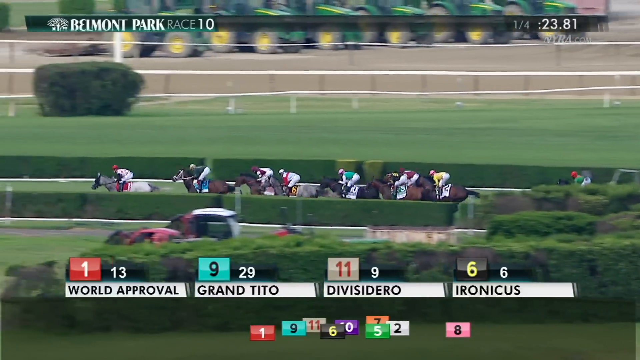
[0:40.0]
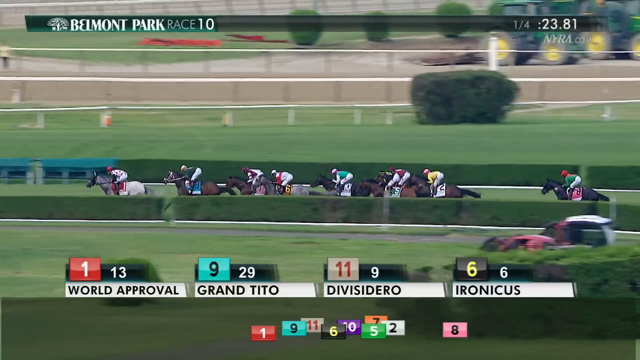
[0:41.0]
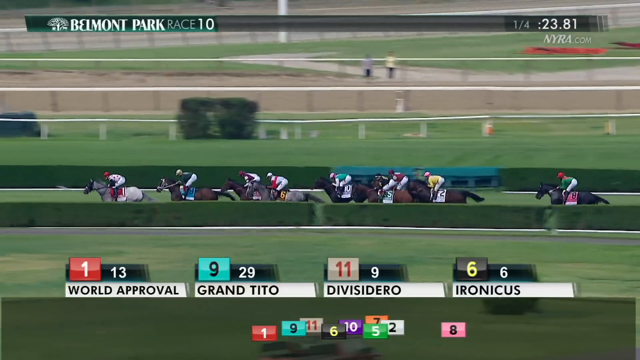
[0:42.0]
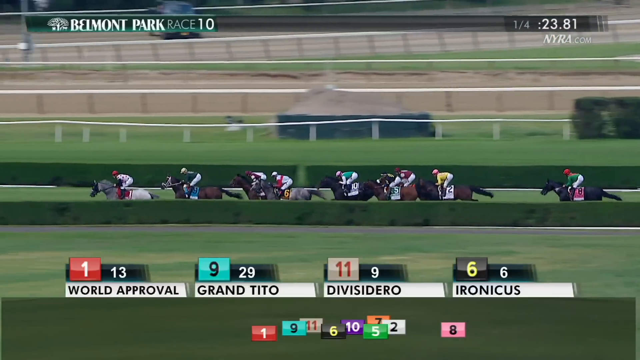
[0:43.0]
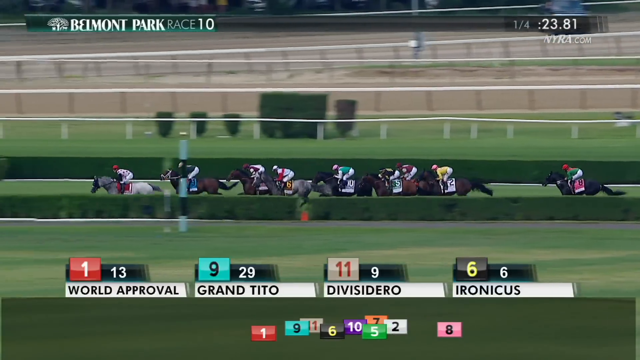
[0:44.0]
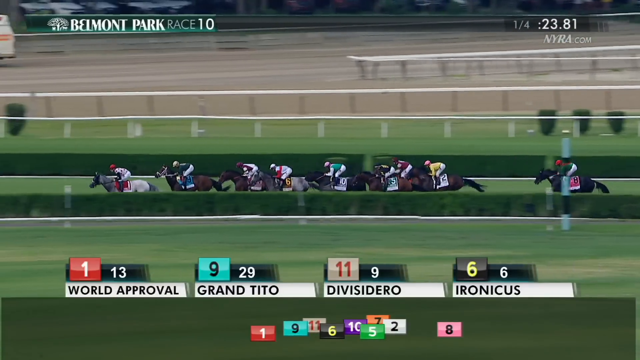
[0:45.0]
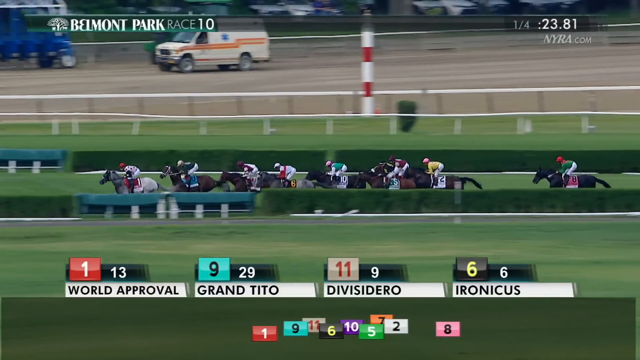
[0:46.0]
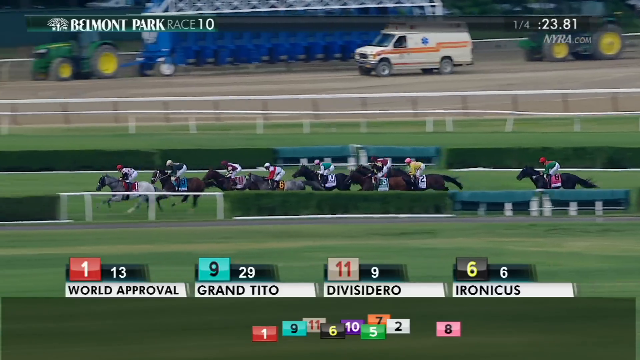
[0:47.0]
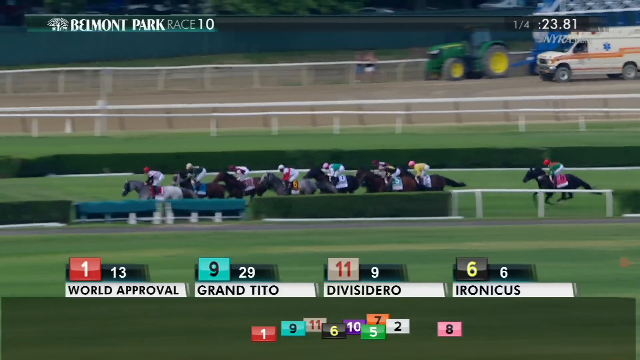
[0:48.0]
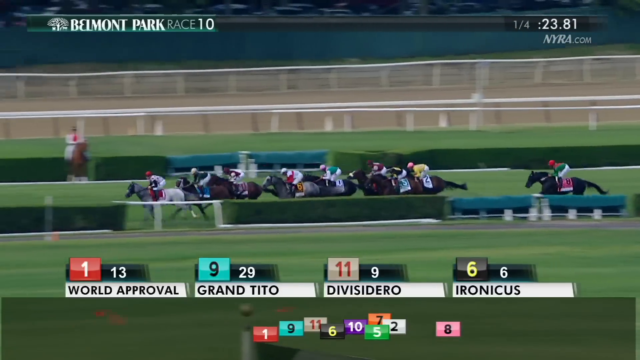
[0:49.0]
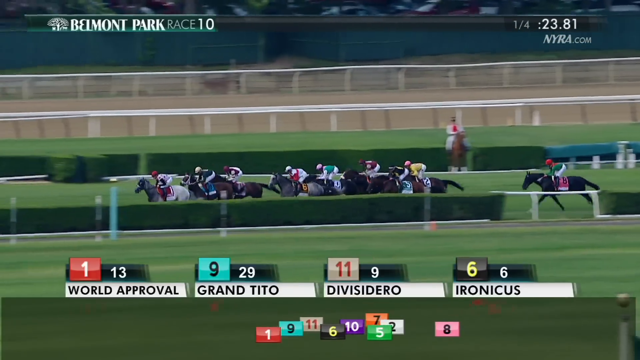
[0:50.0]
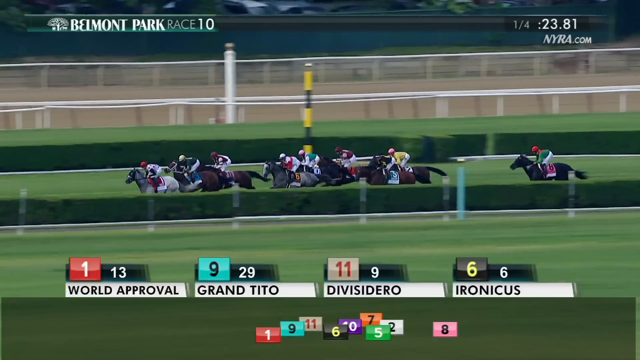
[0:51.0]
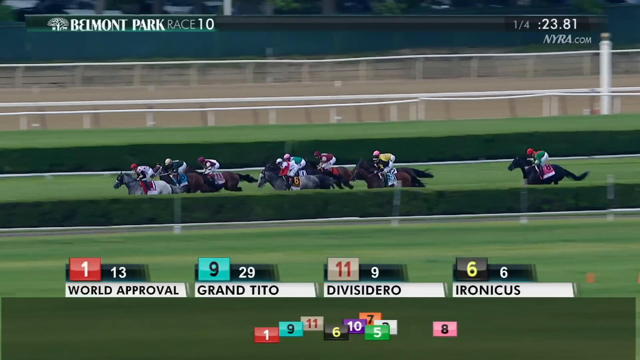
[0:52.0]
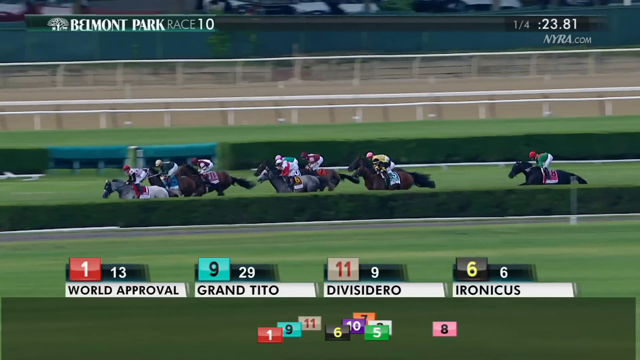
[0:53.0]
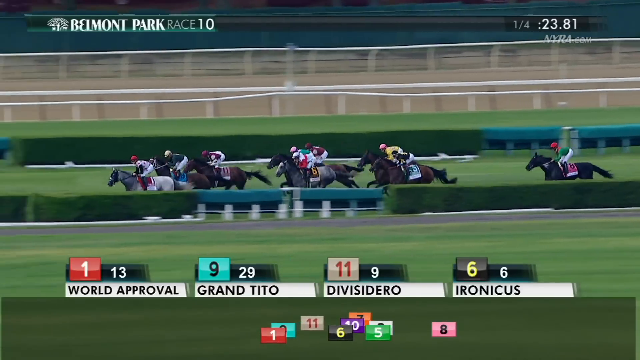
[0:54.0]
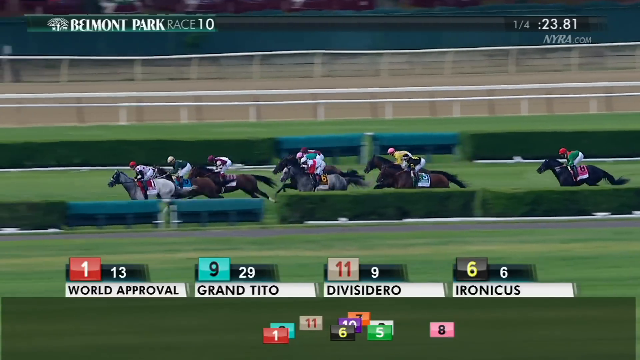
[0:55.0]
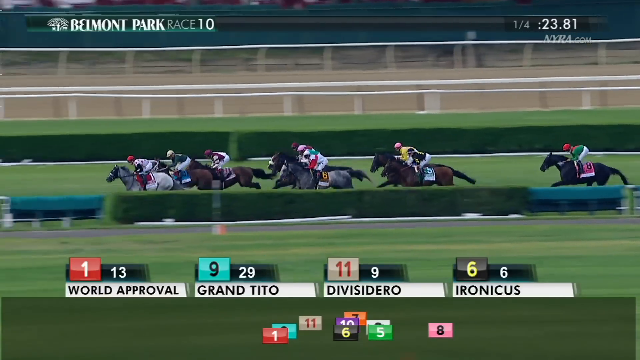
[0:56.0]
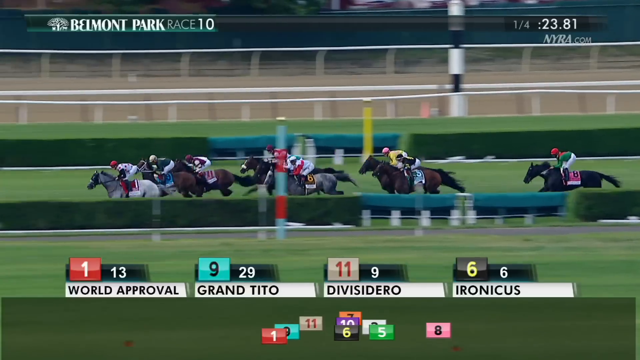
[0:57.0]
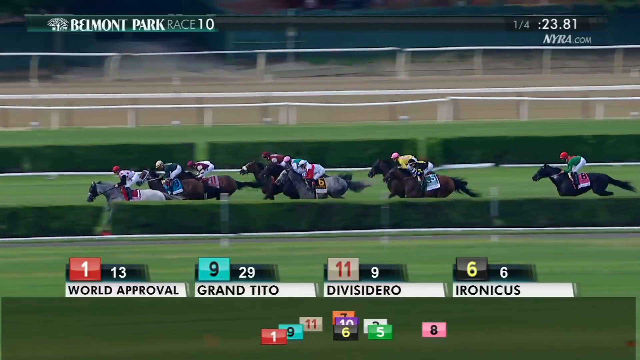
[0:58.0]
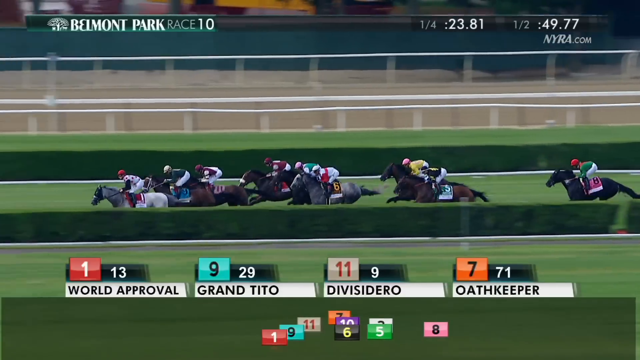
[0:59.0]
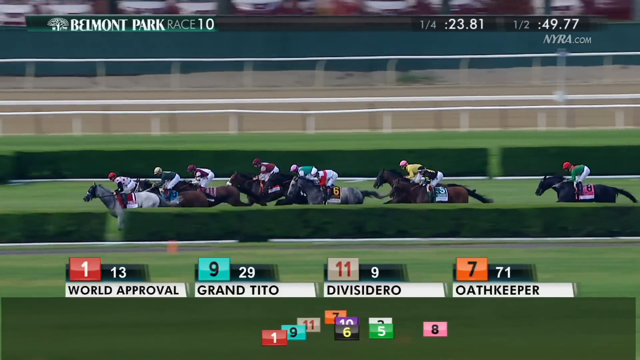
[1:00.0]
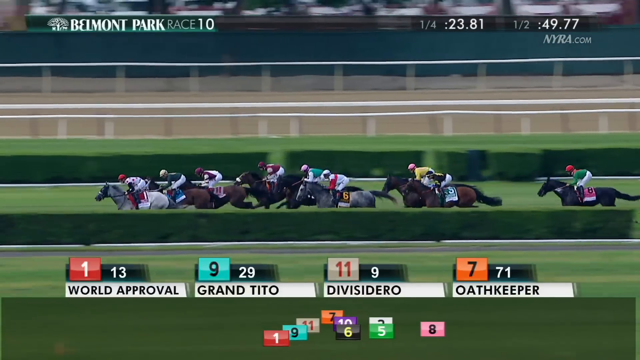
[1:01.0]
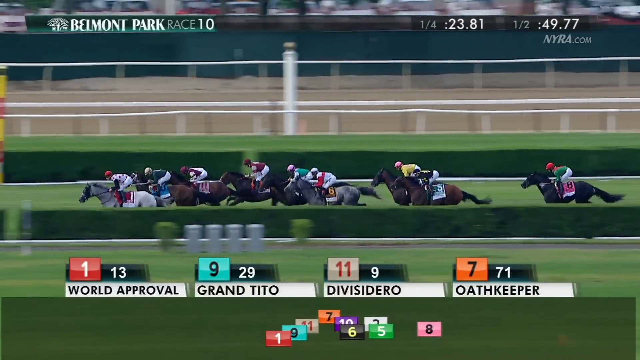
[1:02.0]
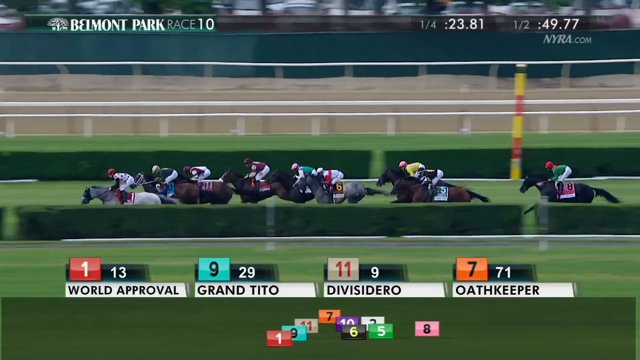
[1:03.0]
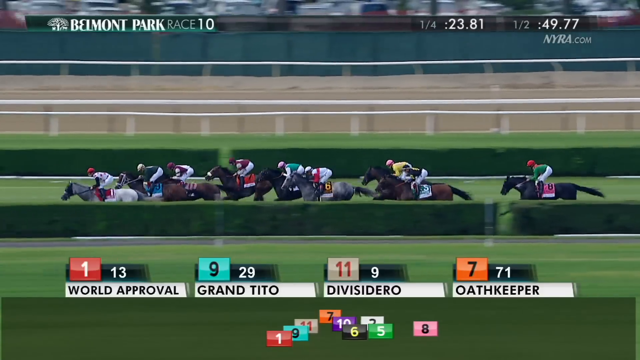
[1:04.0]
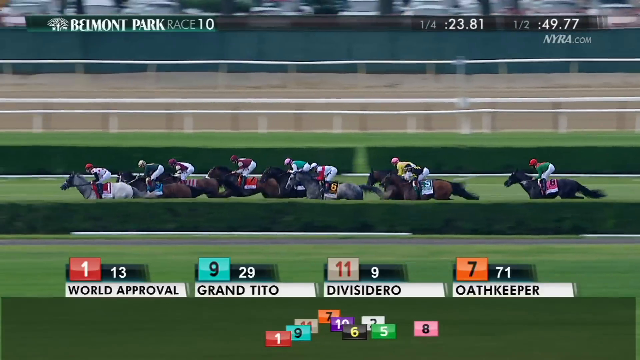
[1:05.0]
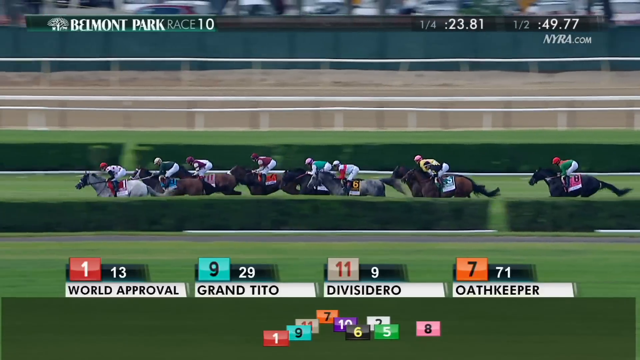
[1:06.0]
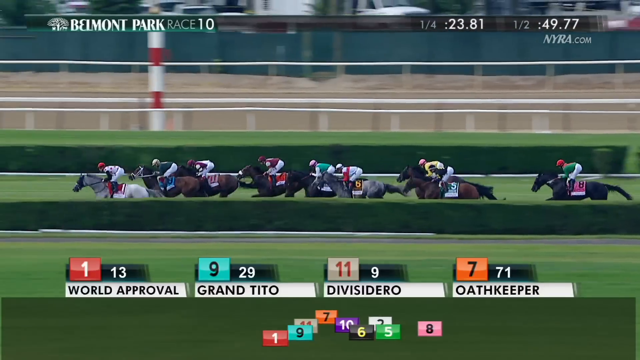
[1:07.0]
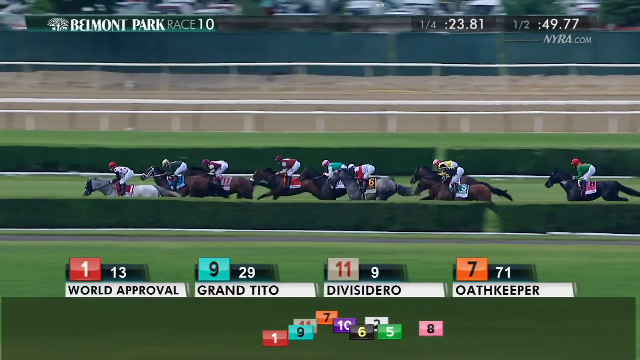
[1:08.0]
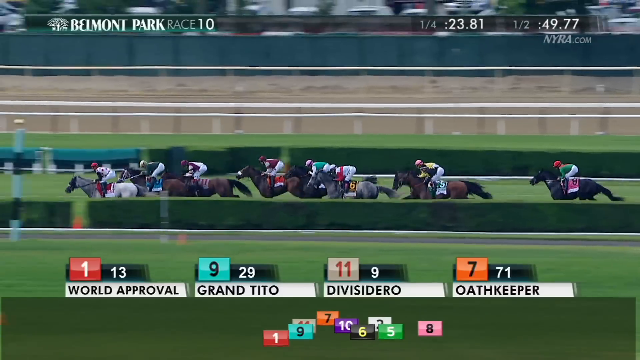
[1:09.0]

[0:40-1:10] Horses race around a horse track. At the top left is "Belmont Park" and race 10, and on the right a quarter time of 23.81 is shown. The placings at the bottom show World Approval in first, Grand Tito in second, Divisadero in third and Ironicus in fourth. The track is very green, with short hedges around its edges. The horses gallop at a steady pace with no real change in placings at first. At the top right the text reads "nyra.com". Oathkeeper then passes Ironicus to take fourth. The horses keep running down the track, and in the background there is nothing but fields; it is a very open track.